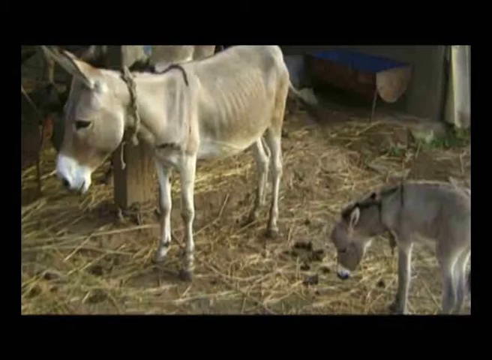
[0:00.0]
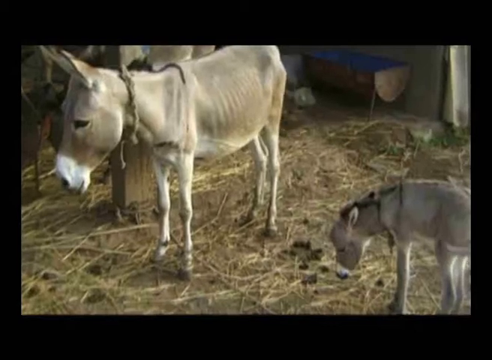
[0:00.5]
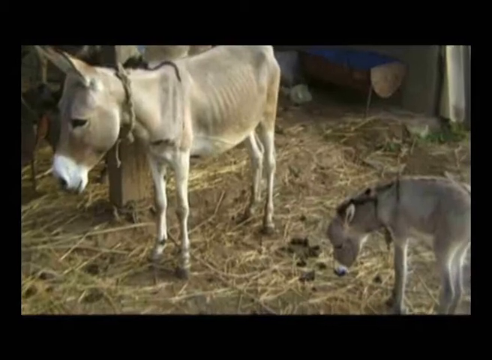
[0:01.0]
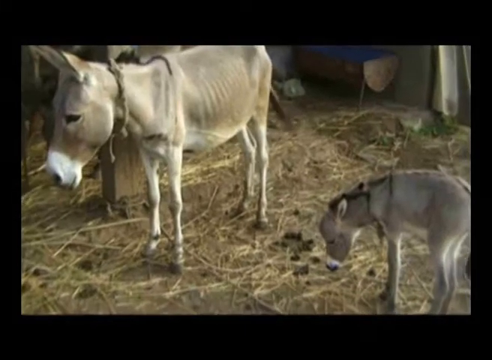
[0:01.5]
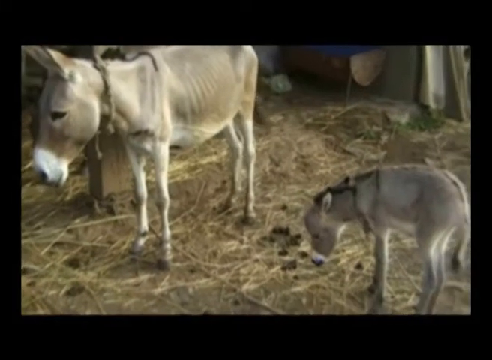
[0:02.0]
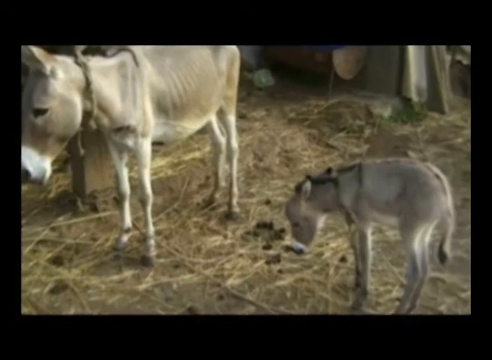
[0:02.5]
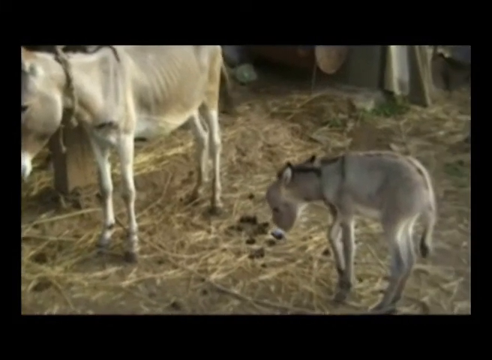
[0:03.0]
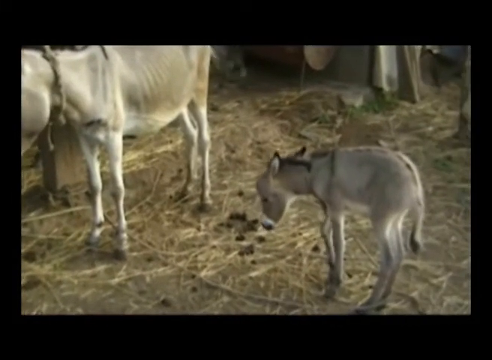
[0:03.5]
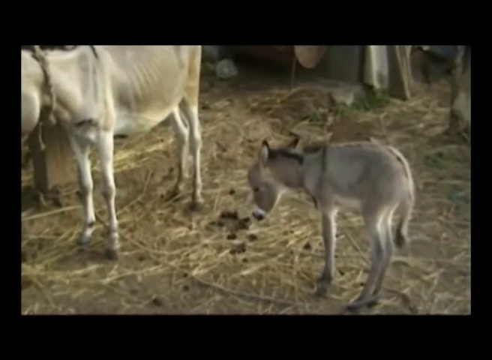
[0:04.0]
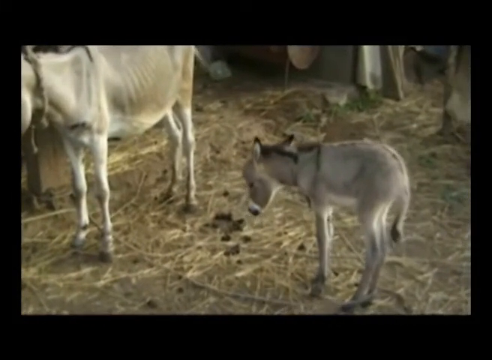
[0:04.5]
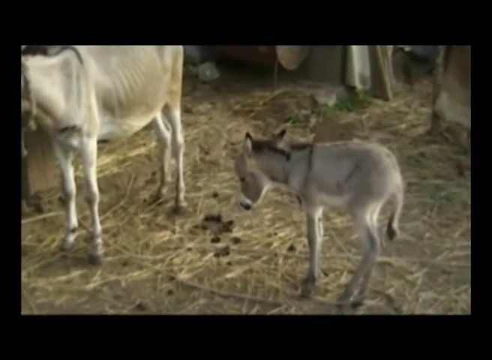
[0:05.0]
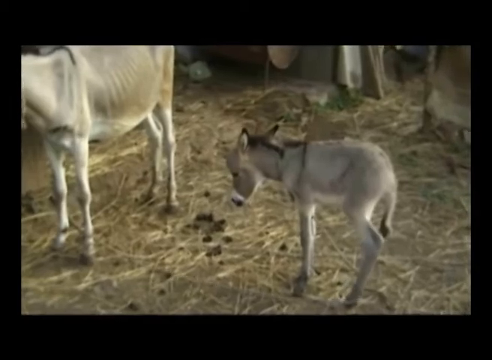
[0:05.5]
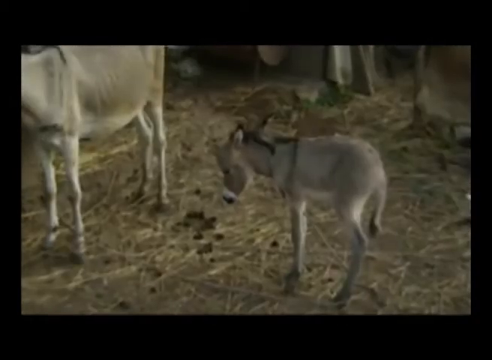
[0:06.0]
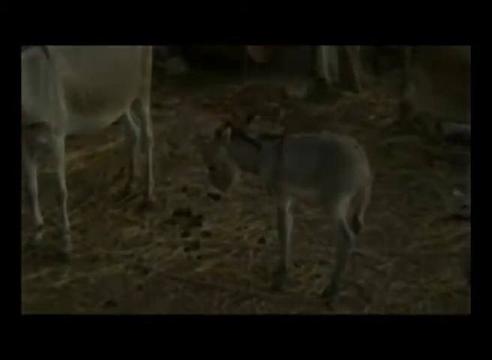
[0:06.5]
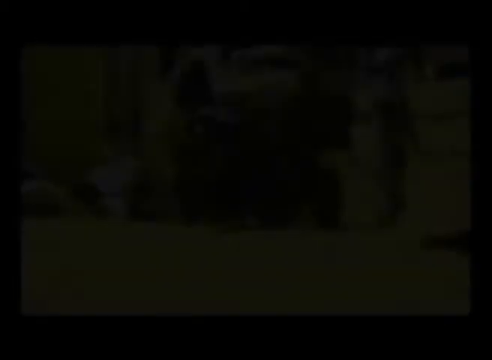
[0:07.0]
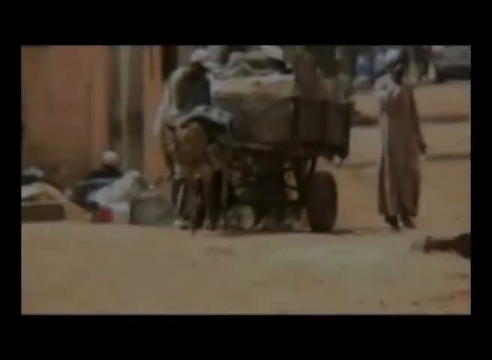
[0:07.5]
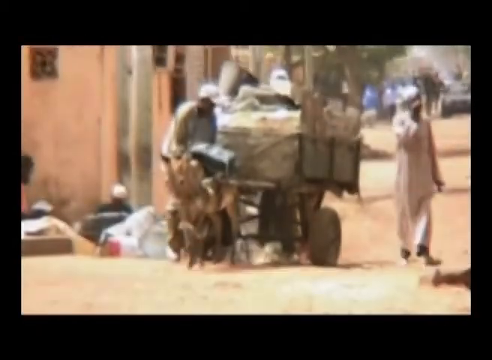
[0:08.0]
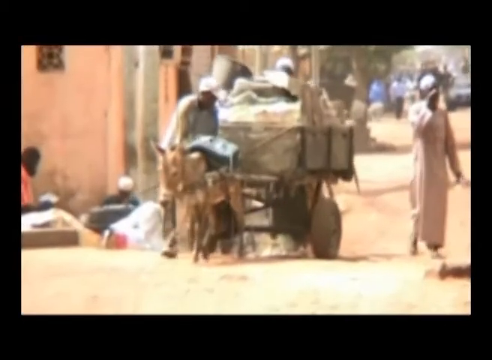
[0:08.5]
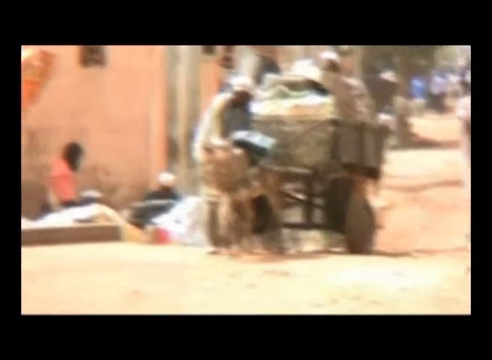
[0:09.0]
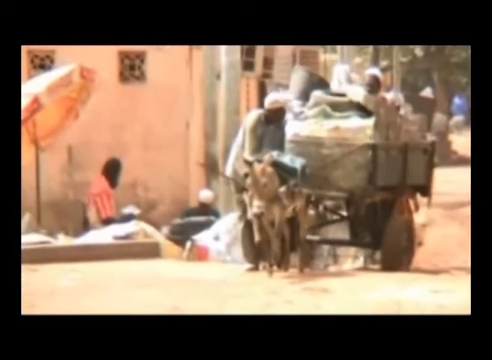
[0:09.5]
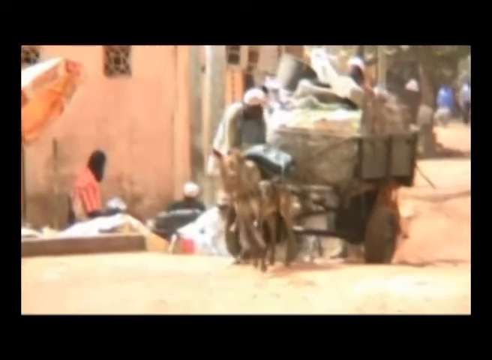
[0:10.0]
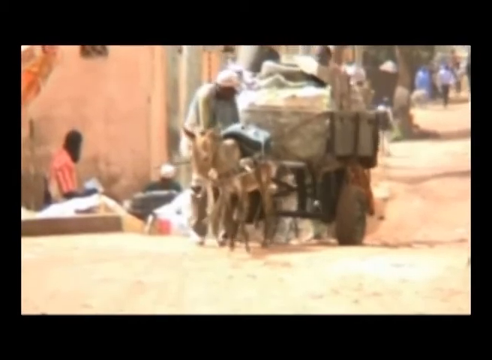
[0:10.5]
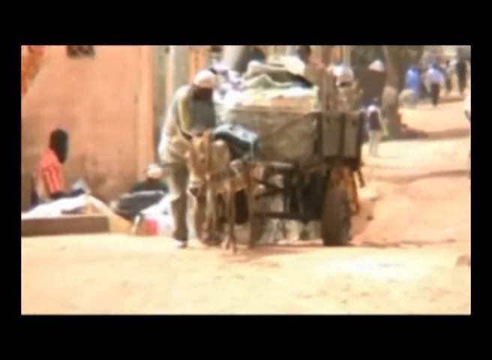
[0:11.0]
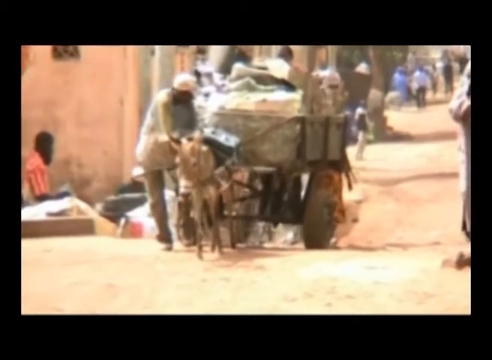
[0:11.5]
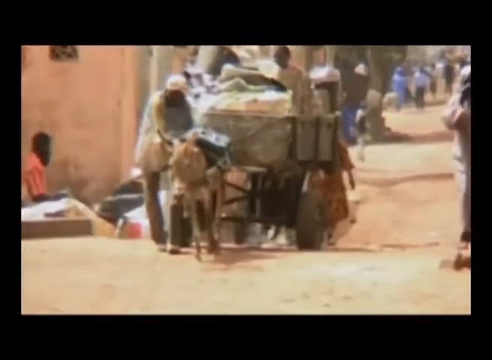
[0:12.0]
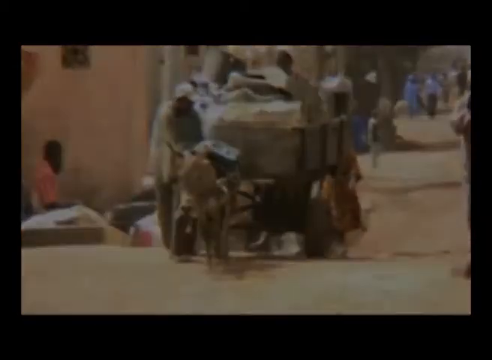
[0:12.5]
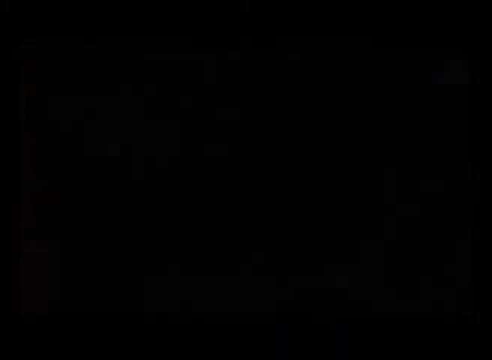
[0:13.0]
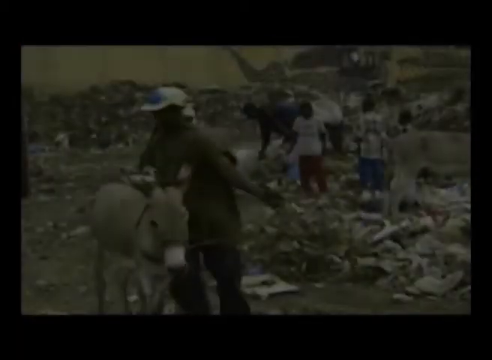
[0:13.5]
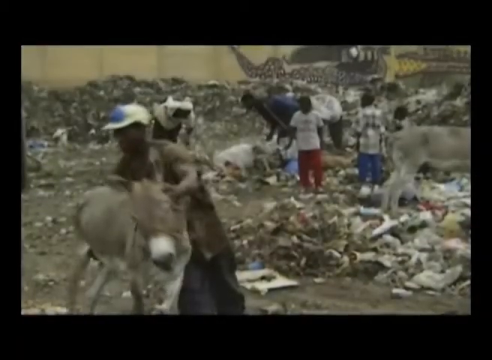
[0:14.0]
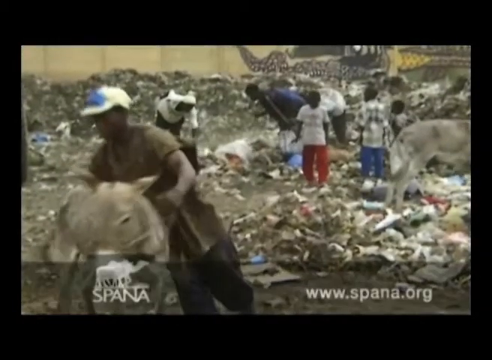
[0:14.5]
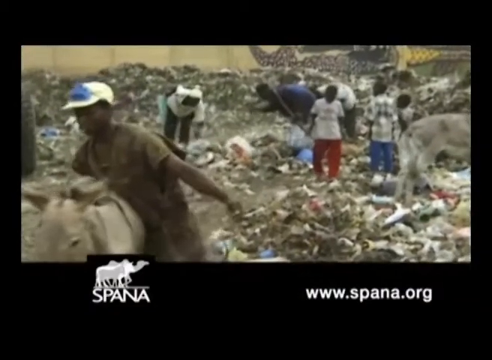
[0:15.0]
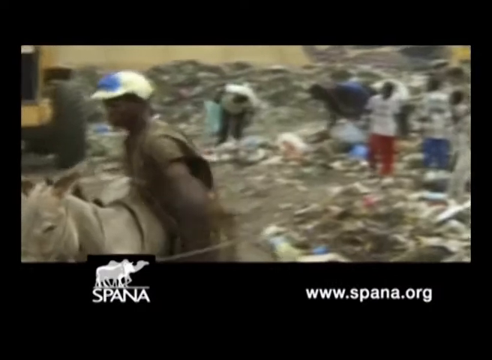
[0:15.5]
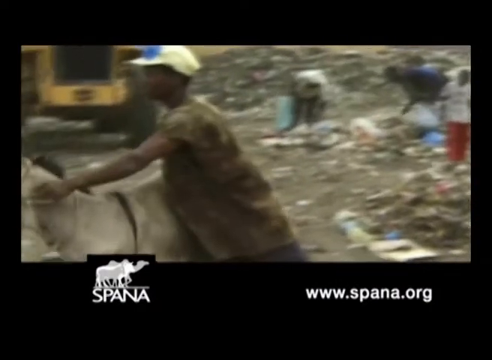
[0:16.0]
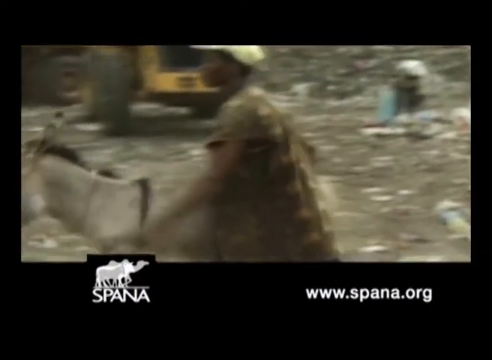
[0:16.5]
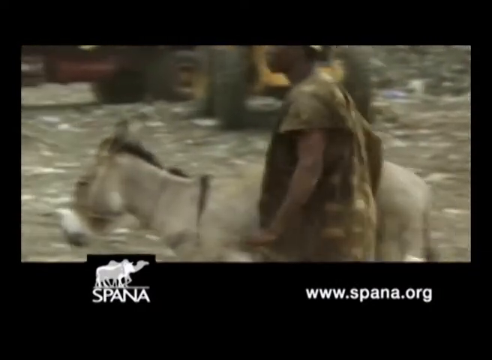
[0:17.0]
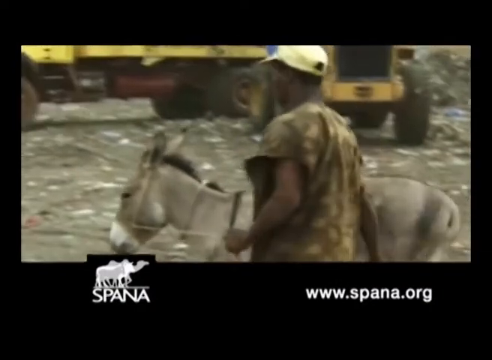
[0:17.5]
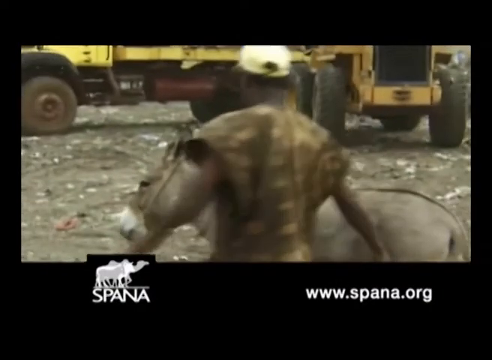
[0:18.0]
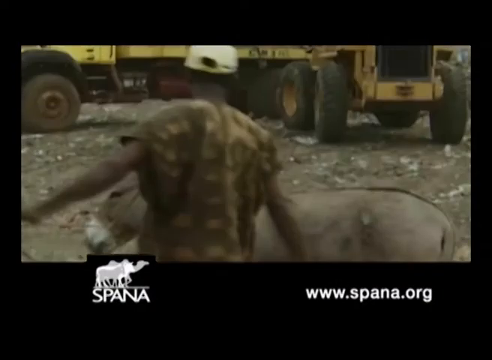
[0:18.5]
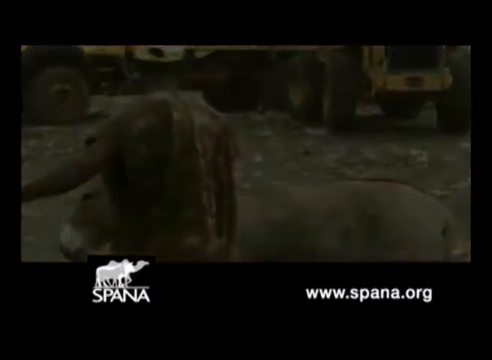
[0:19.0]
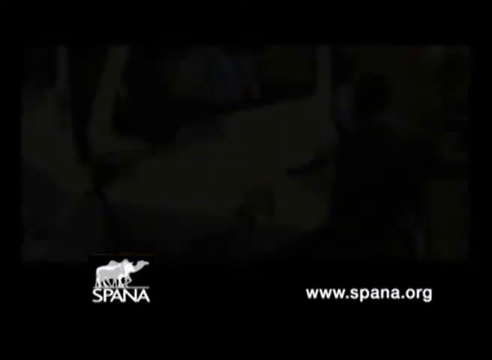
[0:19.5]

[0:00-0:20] A donkey has just given birth to a little donkey. People are taking care of donkeys.